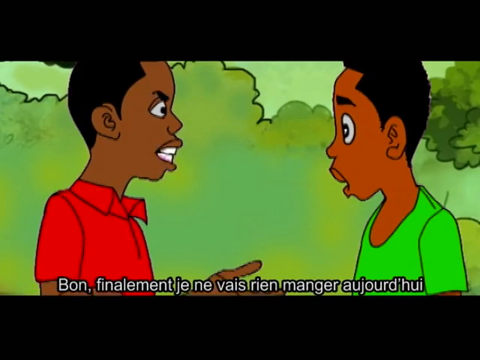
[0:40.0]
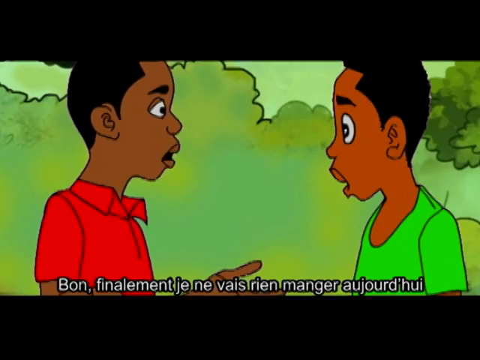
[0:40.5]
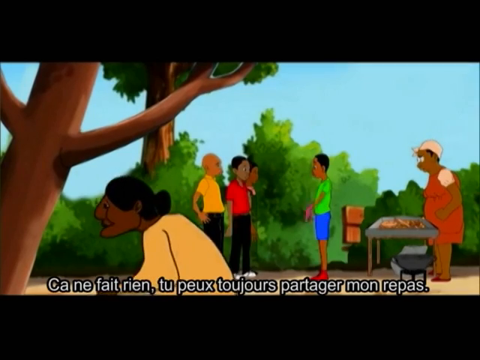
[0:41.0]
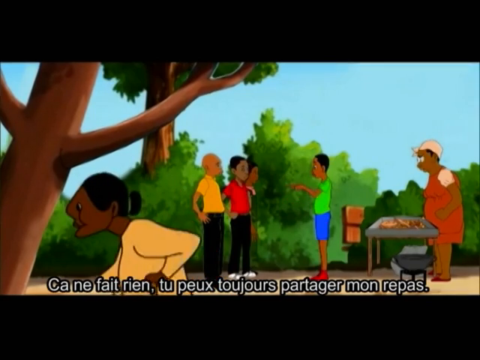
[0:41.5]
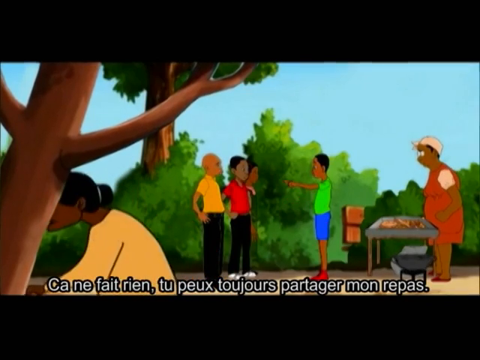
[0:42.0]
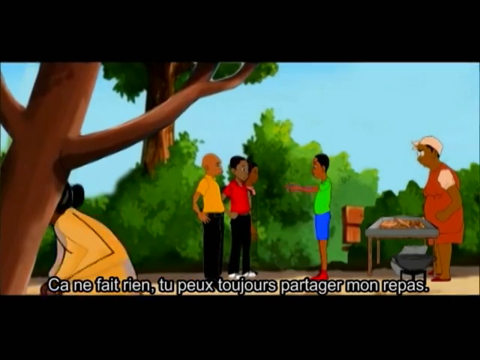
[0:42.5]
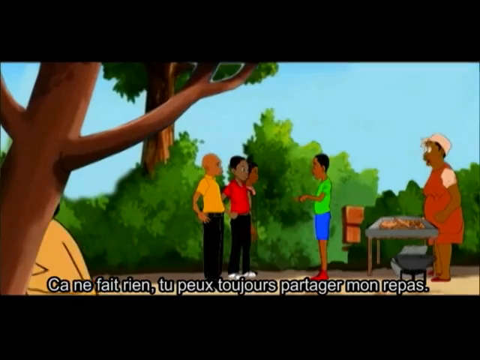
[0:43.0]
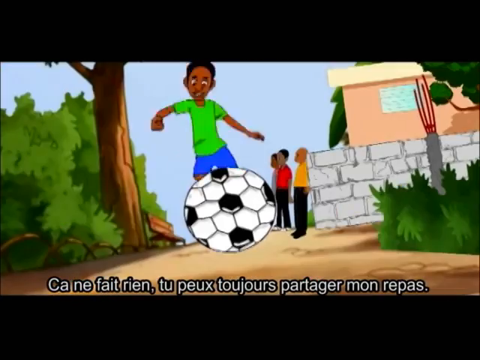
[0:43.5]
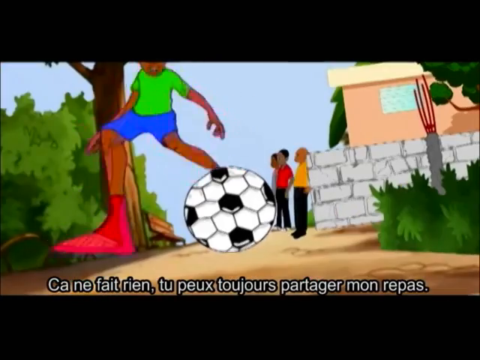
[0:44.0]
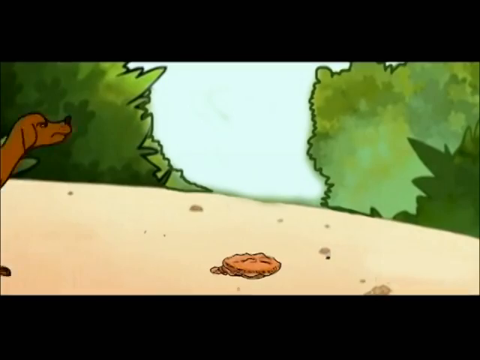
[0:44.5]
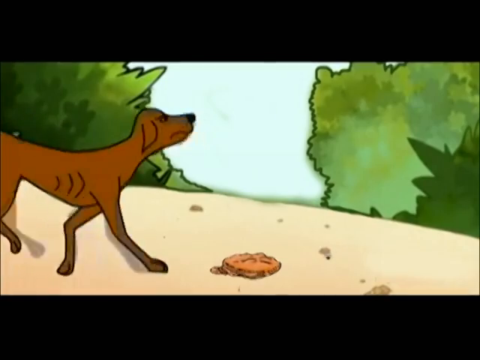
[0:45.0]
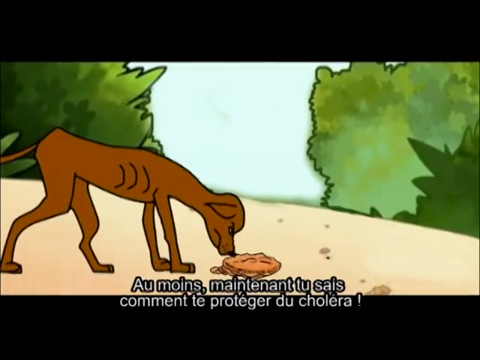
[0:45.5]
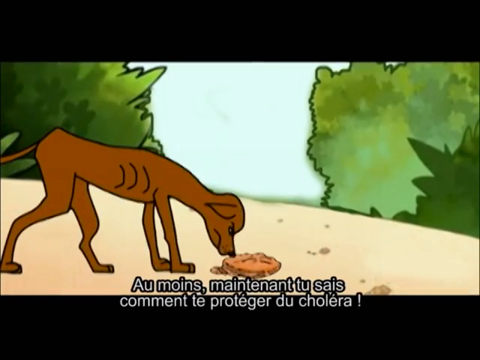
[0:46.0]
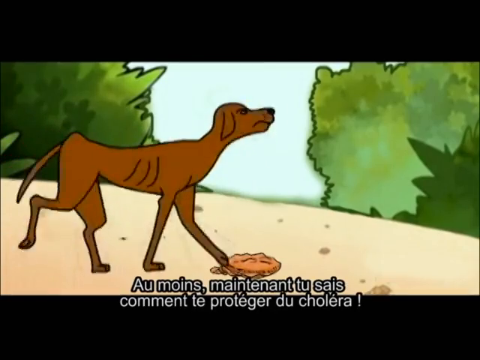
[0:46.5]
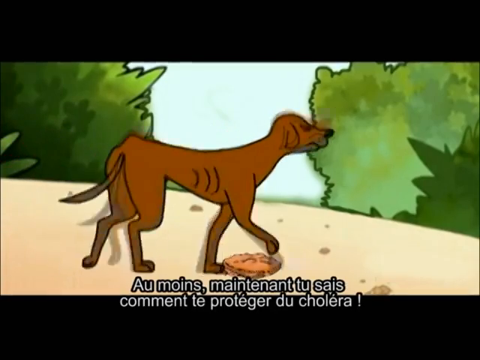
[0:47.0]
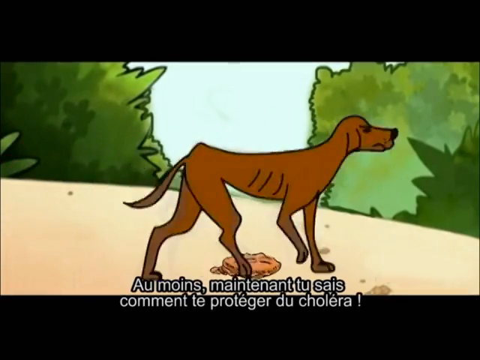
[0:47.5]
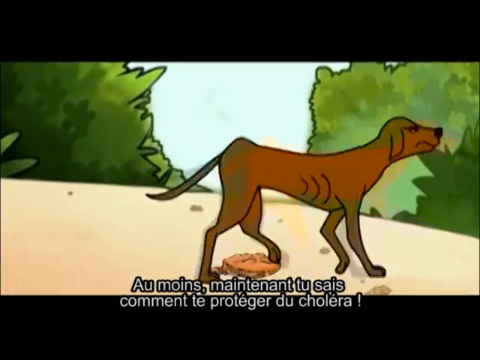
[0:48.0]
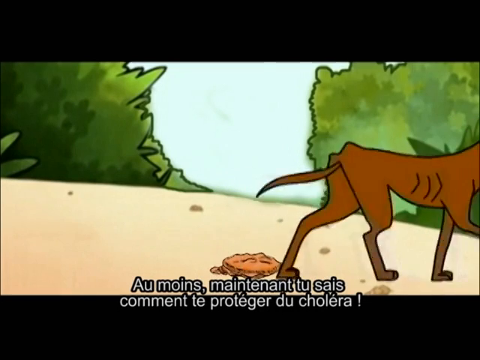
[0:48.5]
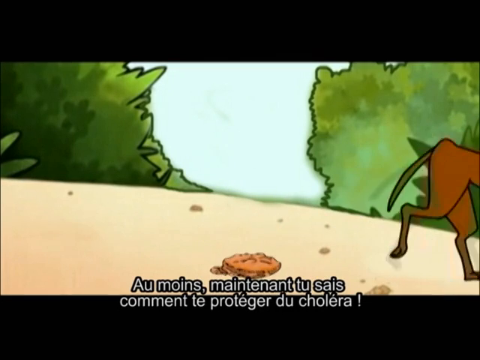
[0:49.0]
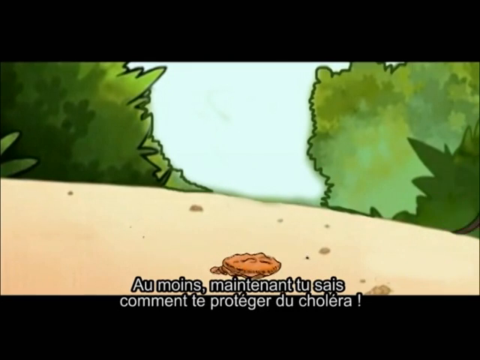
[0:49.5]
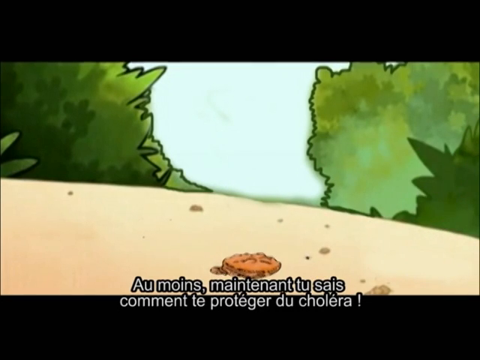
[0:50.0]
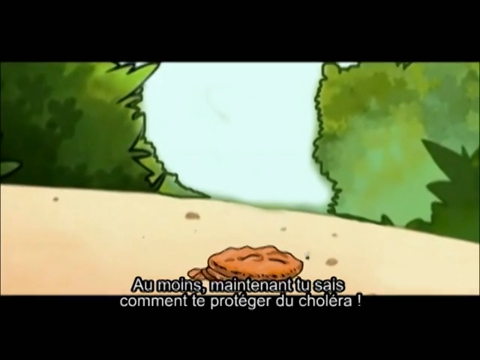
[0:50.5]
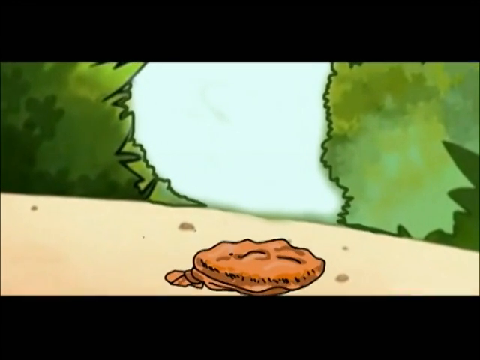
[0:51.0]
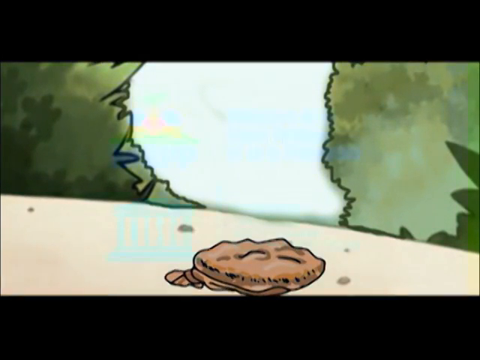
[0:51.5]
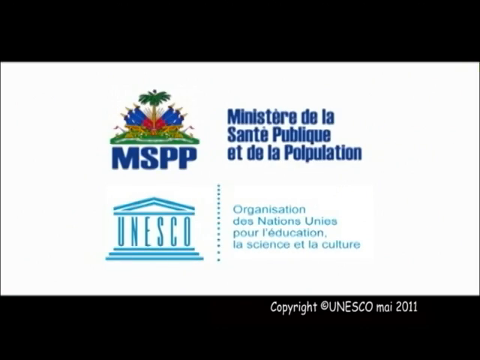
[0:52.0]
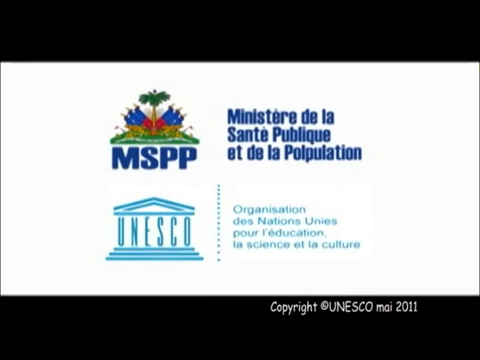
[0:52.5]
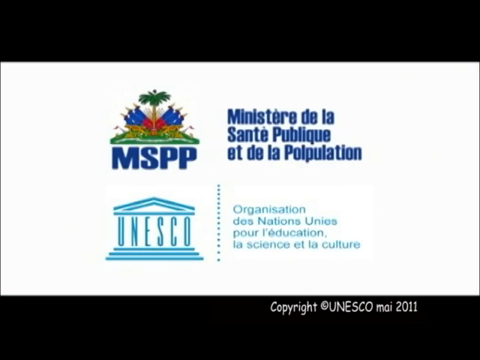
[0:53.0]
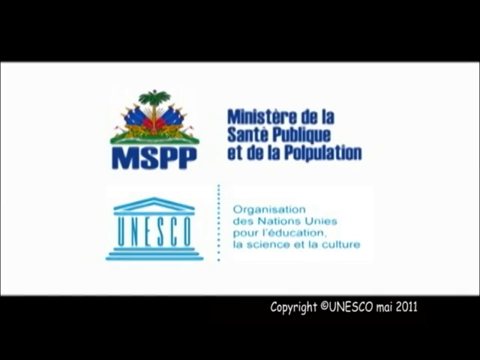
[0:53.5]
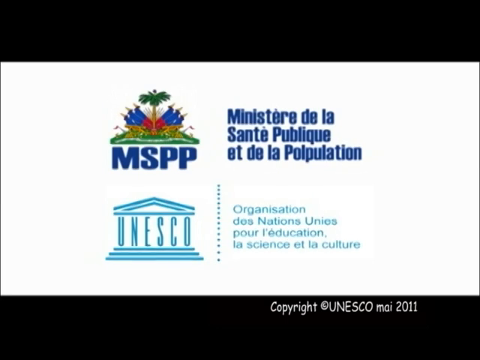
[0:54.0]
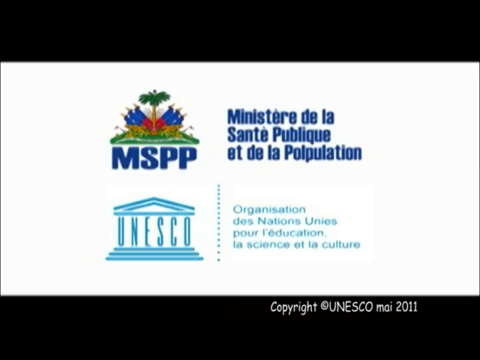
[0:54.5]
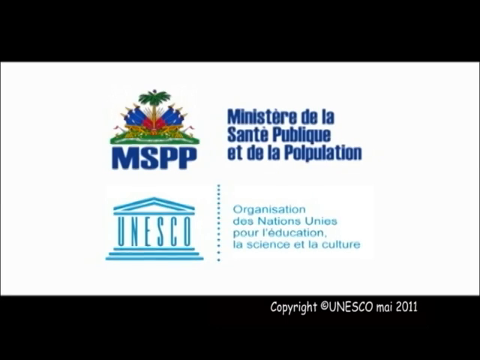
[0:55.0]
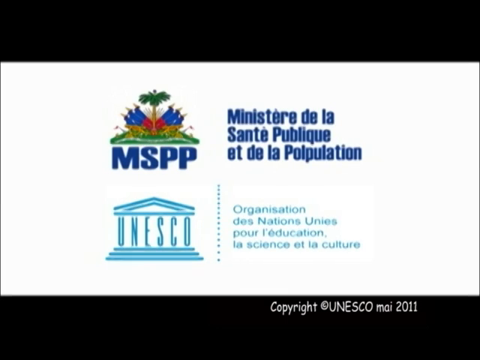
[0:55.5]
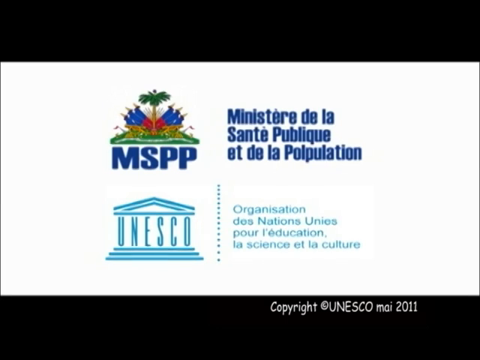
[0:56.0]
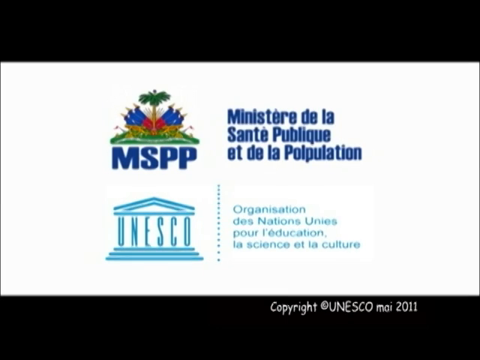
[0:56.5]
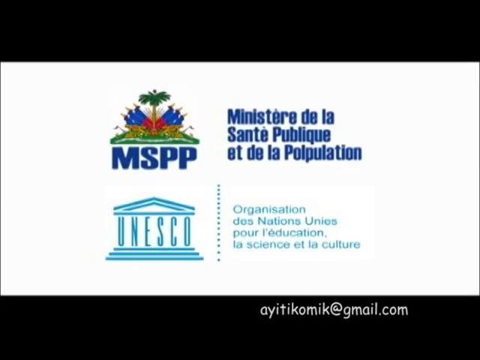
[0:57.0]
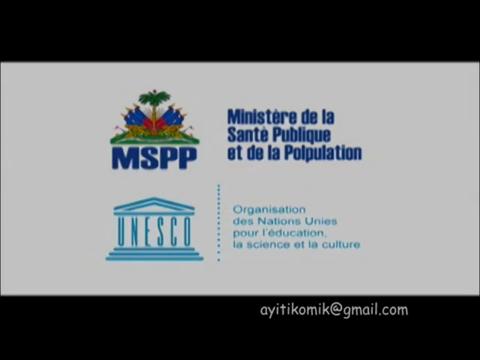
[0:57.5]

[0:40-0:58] Two cartoon-style men of African-American descent, one in a red shirt on the left and one in a green shirt on the right, are arguing with each other. The view pans out to show more people standing in what looks to be a park-like area with shrubs and trees. A man in an orange shirt and a woman in a dress are standing directly next to the man in the red shirt. In front of the man in the red shirt is the man in the green shirt, and behind him is a person at a barbecue. Directly at the front of the screen, an older woman in a yellow shirt walks to the left. The people are all gesturing to each other. A quick image shows the man in green kicking a soccer ball, and then a dog walks toward what looks like a food item on the floor. There are subtitles underneath in a different language. The dog sniffs the food item and then continues walking to the right of the screen. The view zooms in on the food item. The video then switches to a white slide that says "MSPP" and also refers to the UNESCO organization, with a caption saying "copyright UNESCO" and "May 2011".